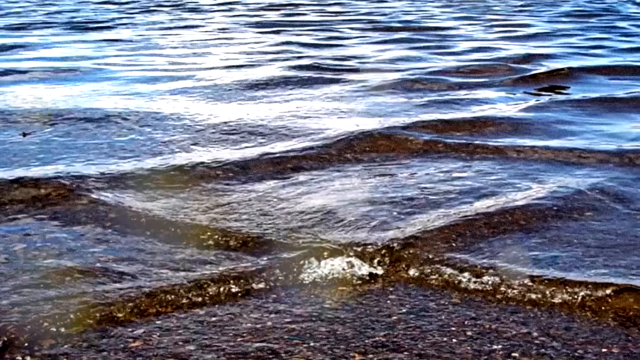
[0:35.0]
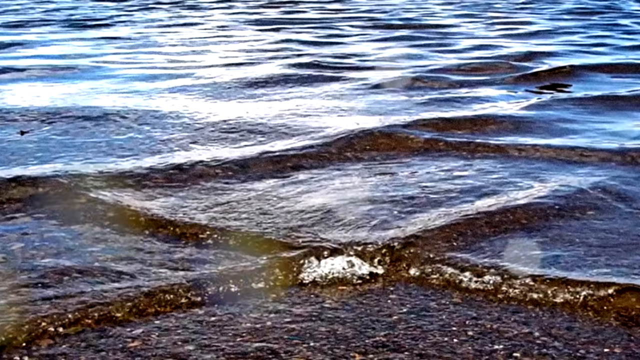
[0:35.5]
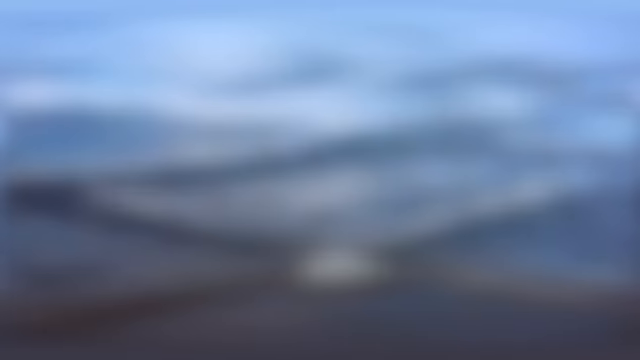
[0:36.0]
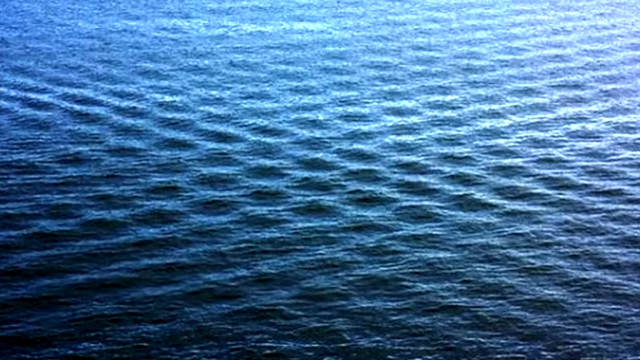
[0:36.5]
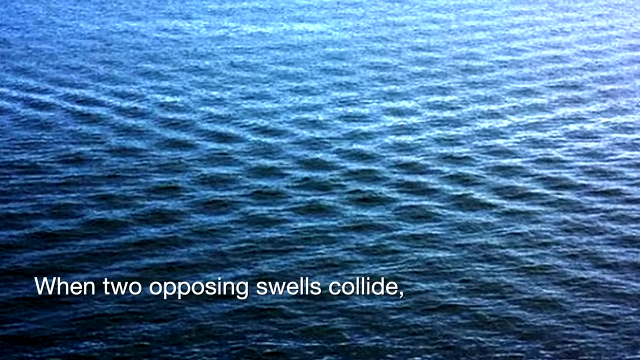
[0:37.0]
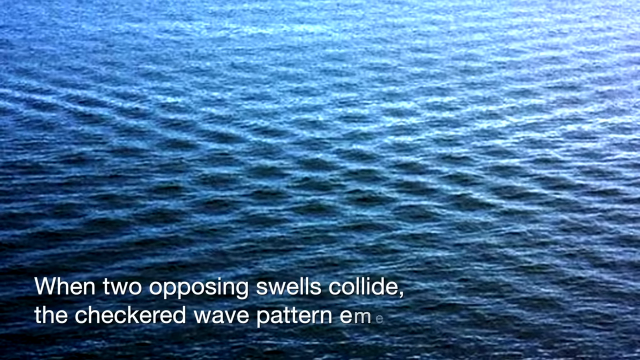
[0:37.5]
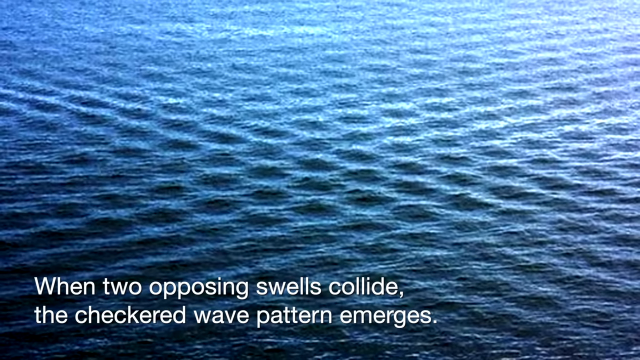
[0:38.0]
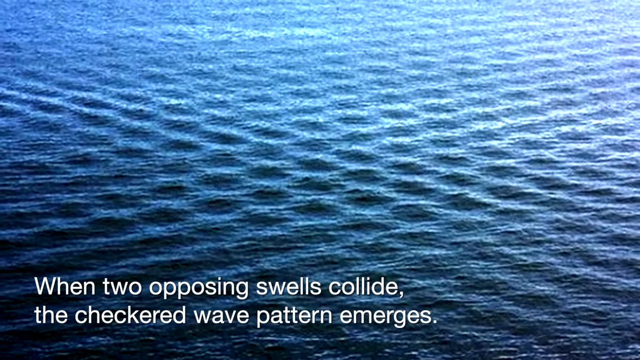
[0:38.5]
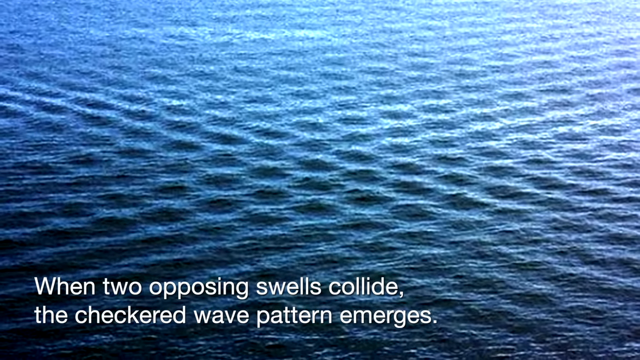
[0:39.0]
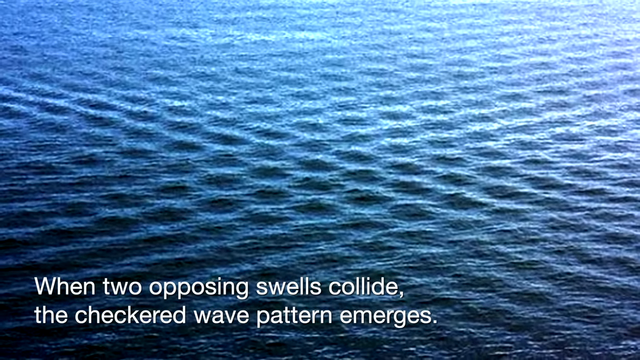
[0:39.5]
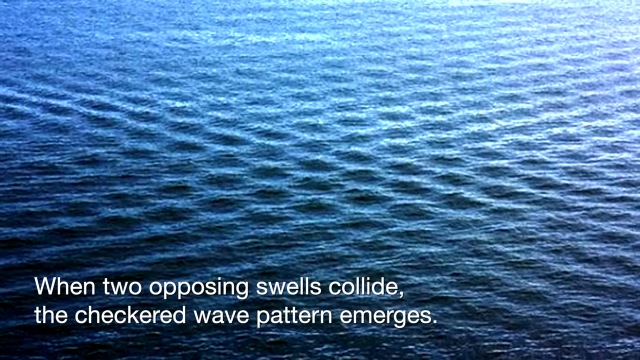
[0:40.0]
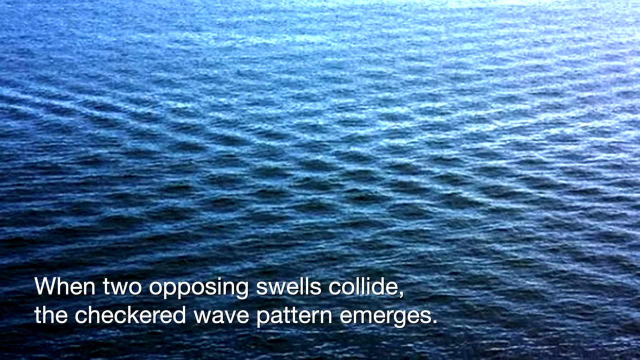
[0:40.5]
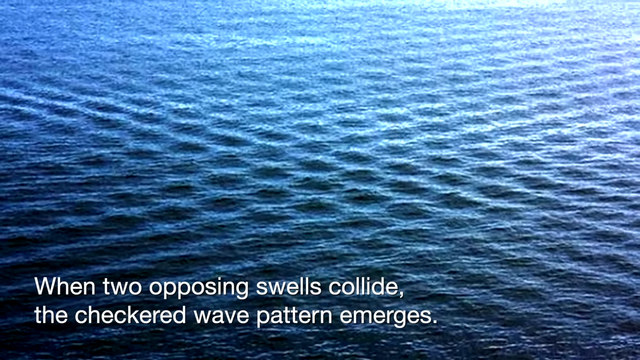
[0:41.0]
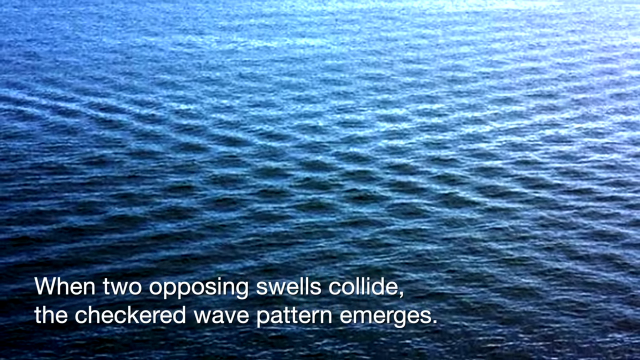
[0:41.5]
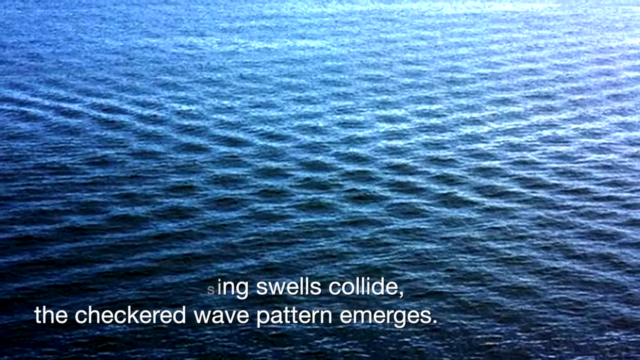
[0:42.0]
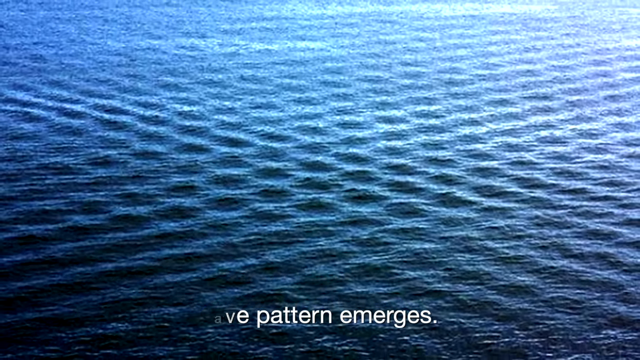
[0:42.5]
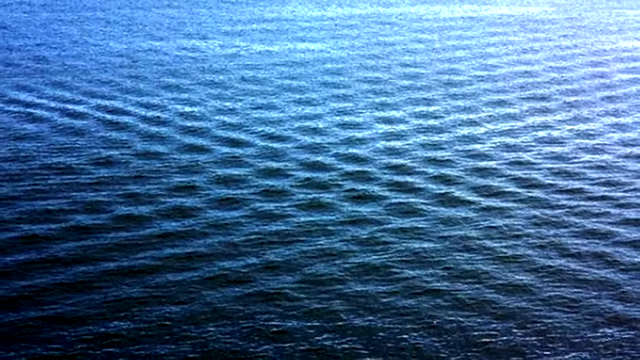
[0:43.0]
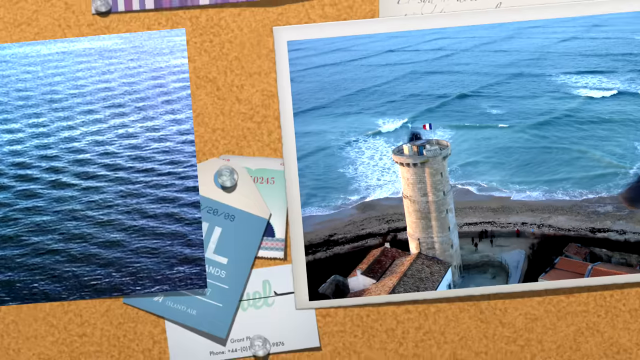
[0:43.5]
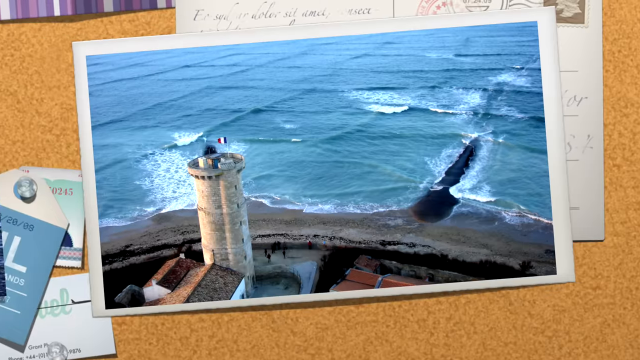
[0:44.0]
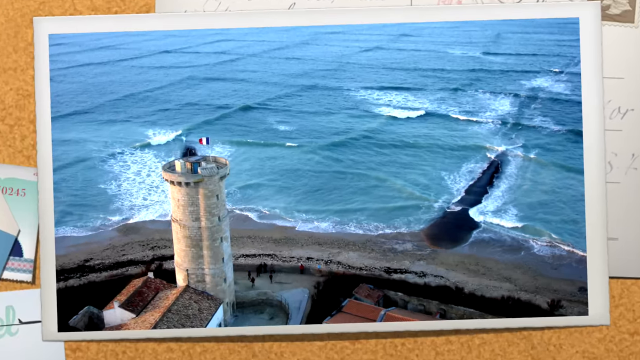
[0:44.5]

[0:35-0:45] Another aerial view shows a body of water whose surface fills the entire image with square waves, looking like a checkerboard. It is daytime, and the sun's rays bounce off the face of the water. White text explains the square wave phenomenon. The camera pans out a bit, and then an aerial view shows another body of water with square waves on top that are much larger than in the previous shot. There is a beach, what looks like a white tower, a flag that appears to be the flag of France, and some buildings.